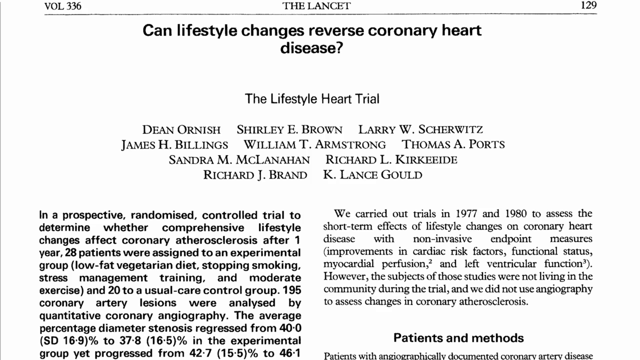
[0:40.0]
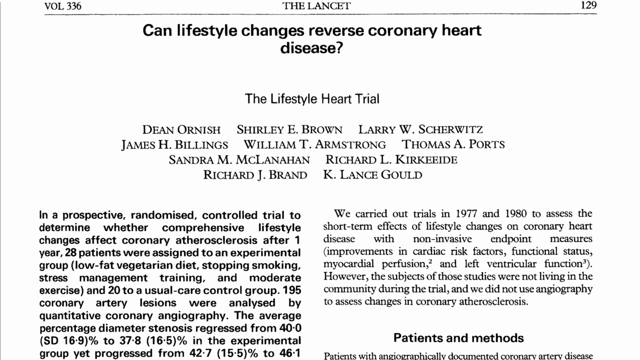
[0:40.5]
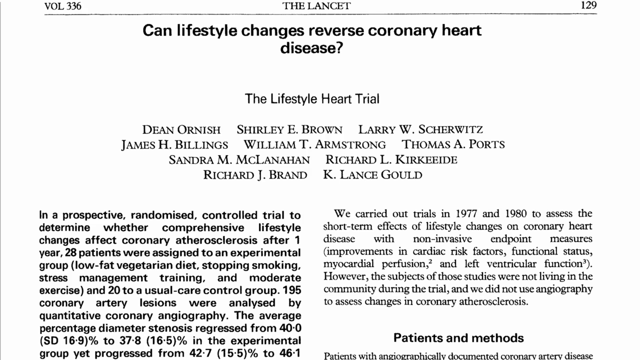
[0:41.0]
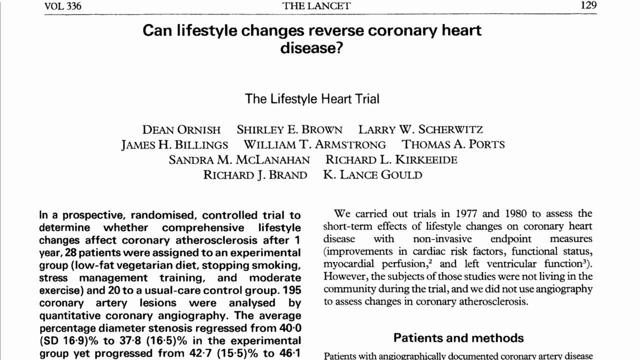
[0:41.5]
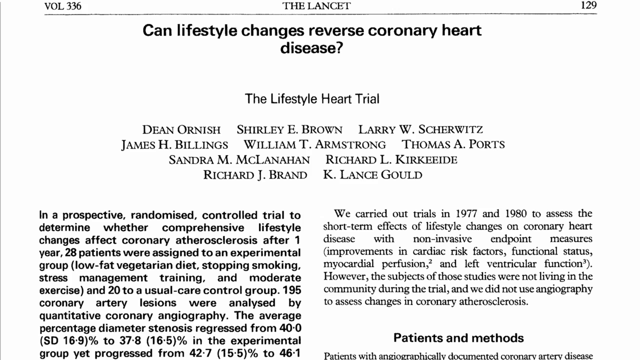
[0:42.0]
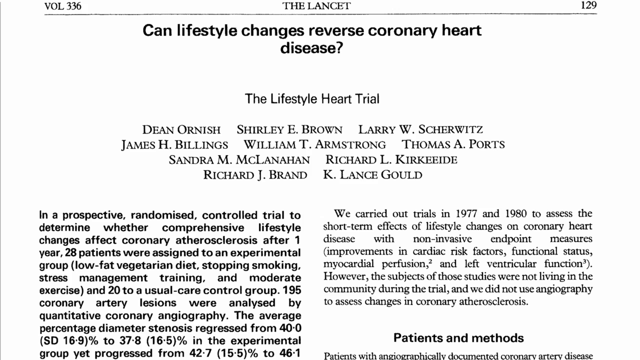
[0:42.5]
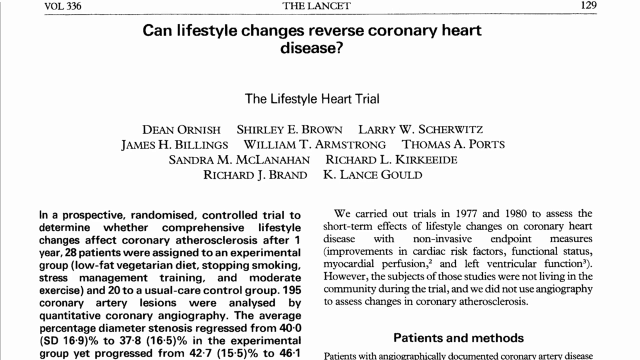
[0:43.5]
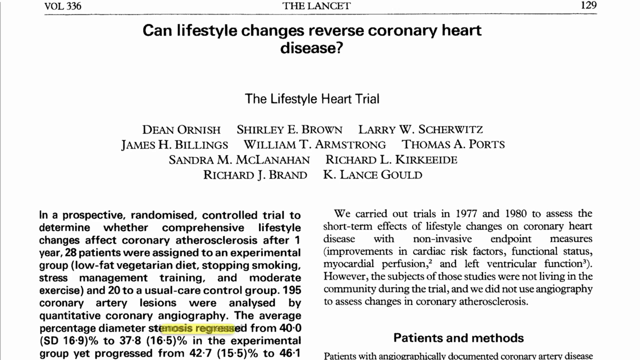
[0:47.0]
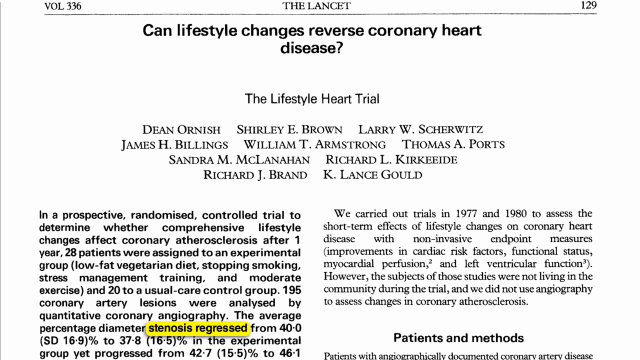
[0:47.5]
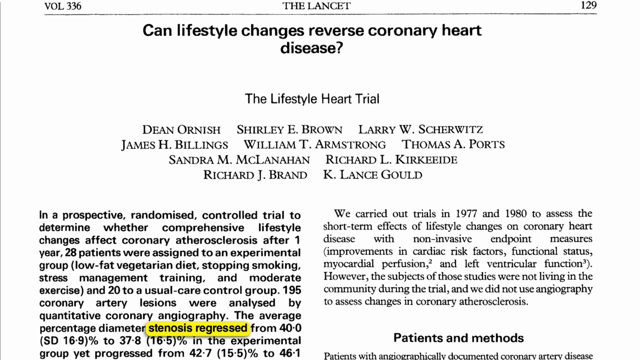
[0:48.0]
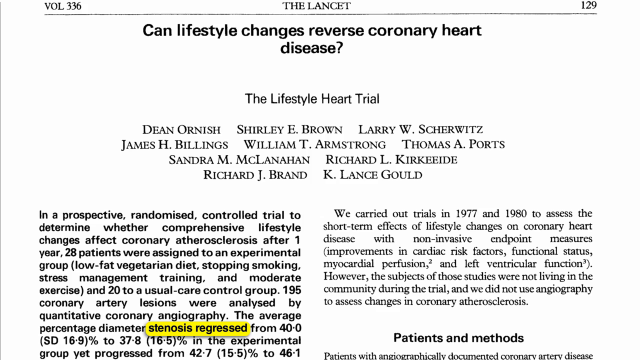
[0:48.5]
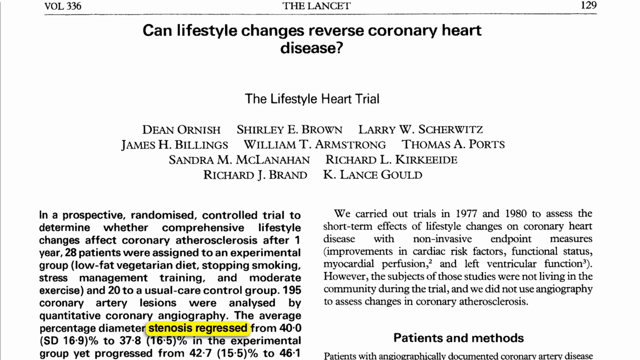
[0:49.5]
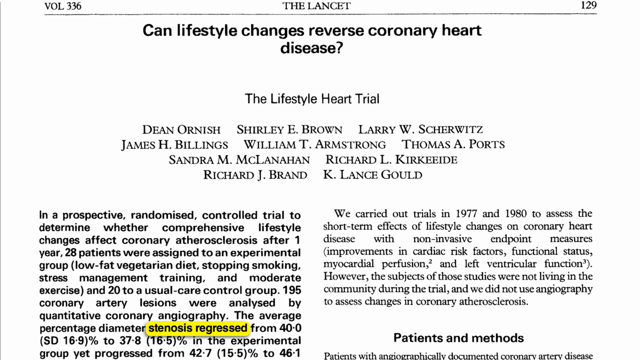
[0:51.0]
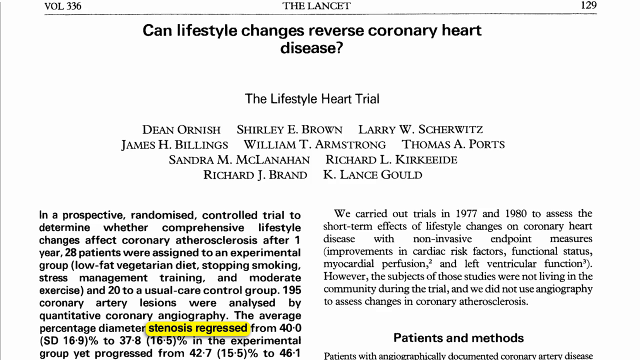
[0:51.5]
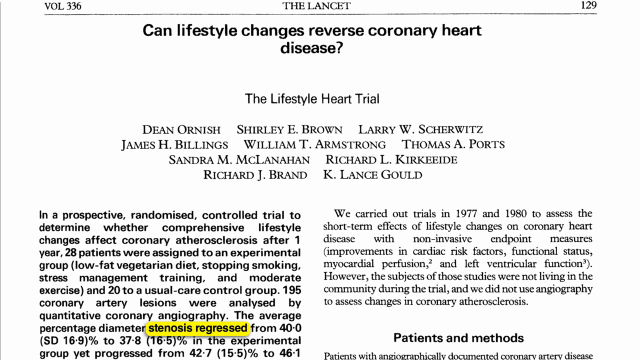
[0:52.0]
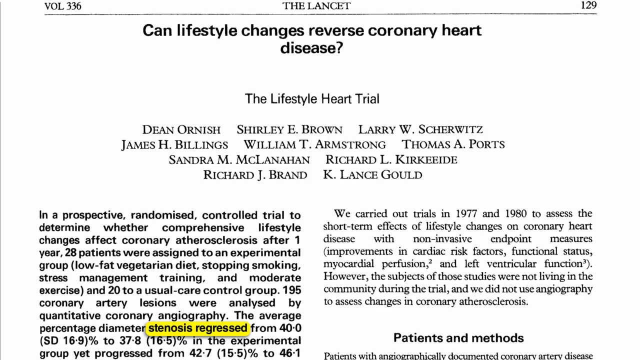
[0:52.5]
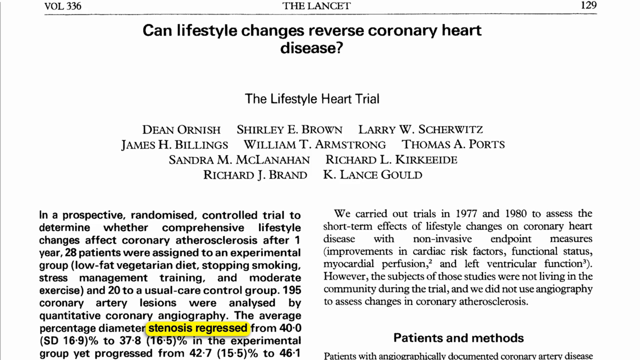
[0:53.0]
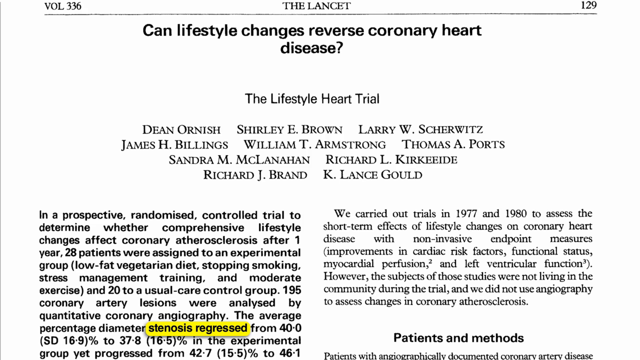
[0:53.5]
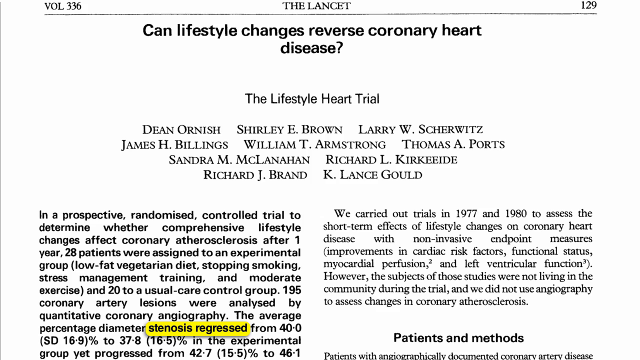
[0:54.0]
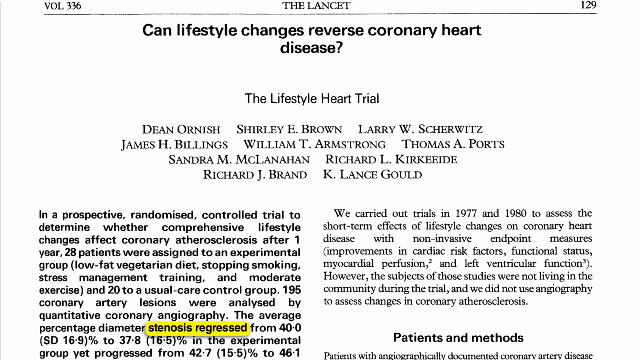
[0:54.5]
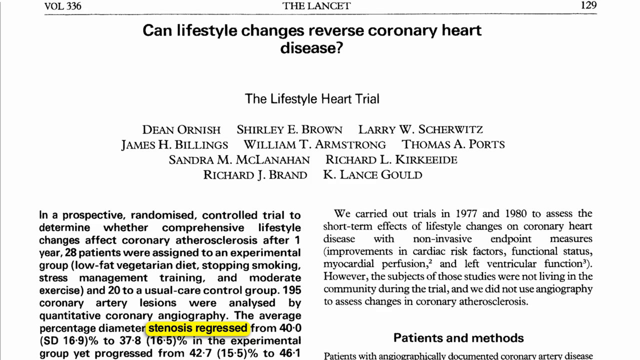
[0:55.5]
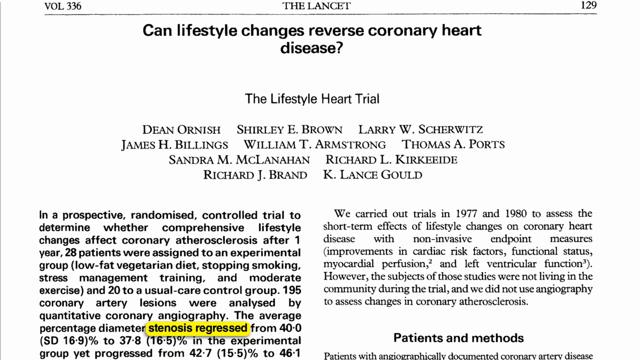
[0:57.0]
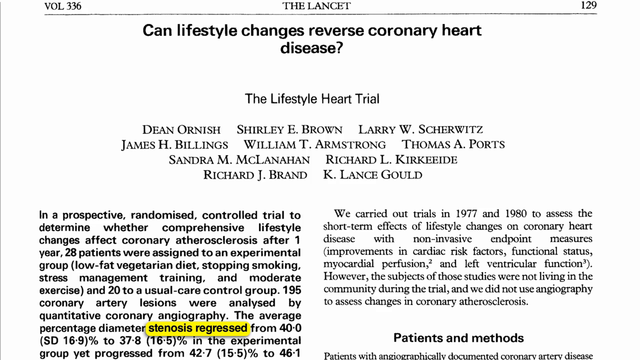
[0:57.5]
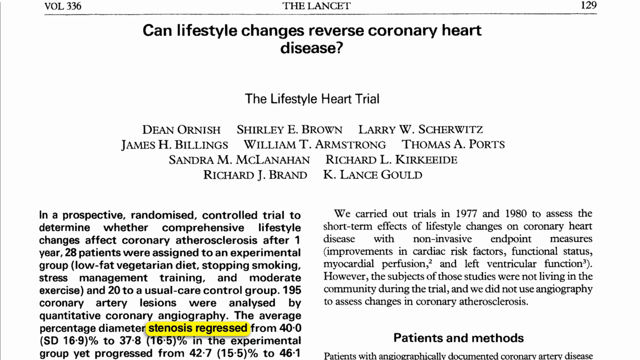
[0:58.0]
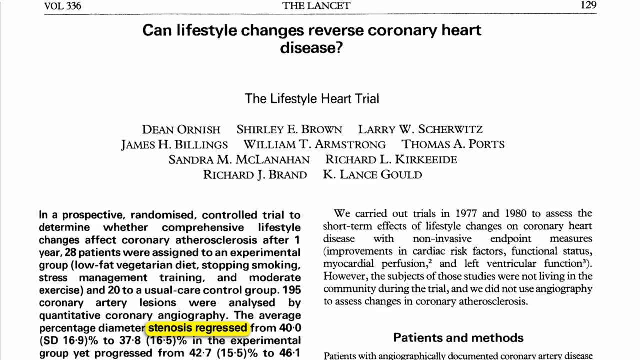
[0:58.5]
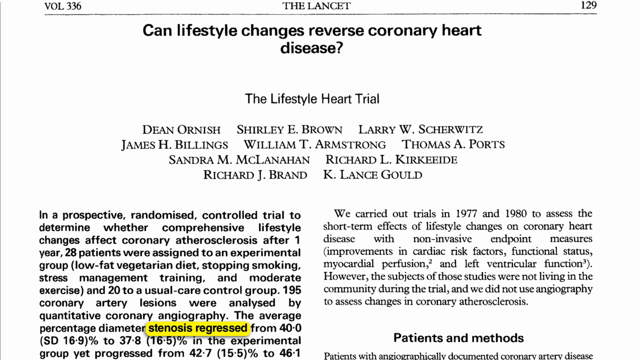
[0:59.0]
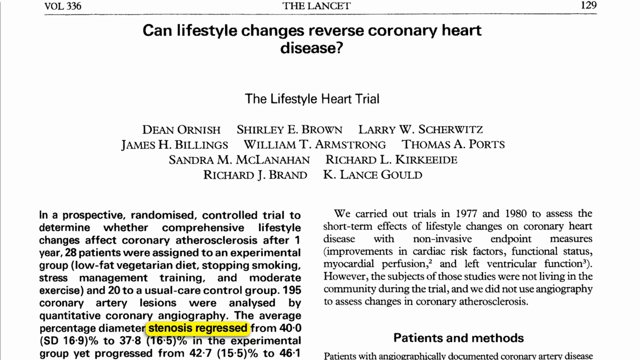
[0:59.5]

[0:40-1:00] The article is still shown, with the bold black title "Can lifestyle changes reverse coronary artery disease?" at the top. On the right side the text reads "we carried out trials in 1977 and 1980 to assess the short-term effects of lifestyle changes on coronary artery disease", followed in parentheses by "improvements in cardiac risk factors, functional status", and then "however, the subjects of those studies were not living in the community during the trial, and we did not use angiography to assess changes in" coronary arteriosclerosis. The authors listed include Dean Onish, Shirley E. Brown, Larry W. Scherowitz, James H. Billings, William T. Armstrong and Thomas A. Ports.